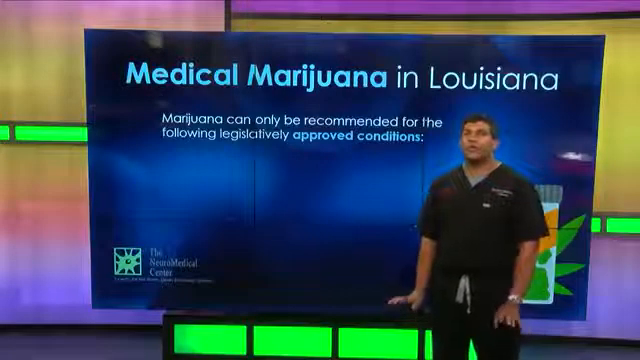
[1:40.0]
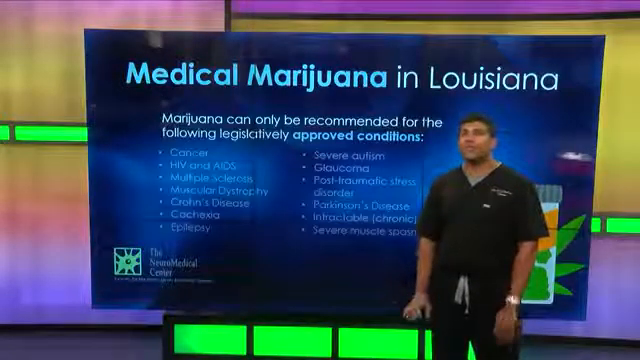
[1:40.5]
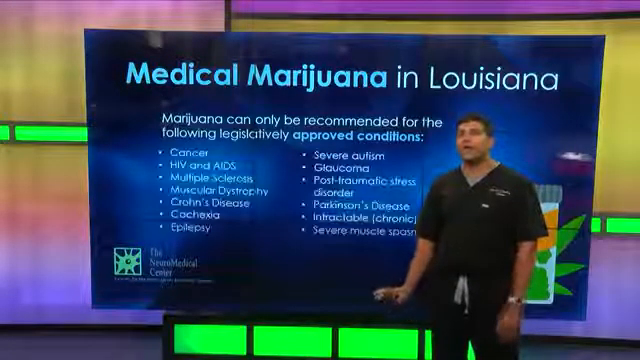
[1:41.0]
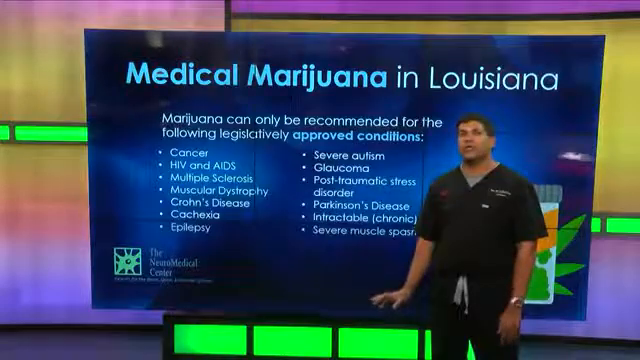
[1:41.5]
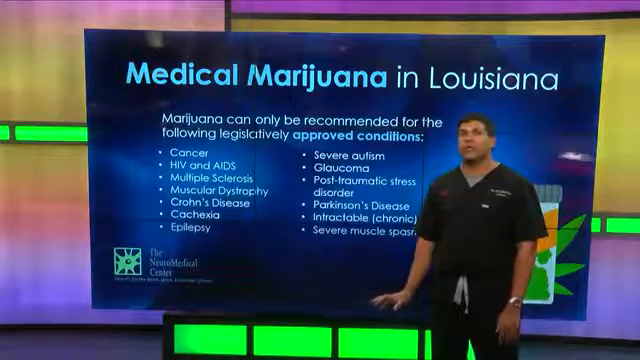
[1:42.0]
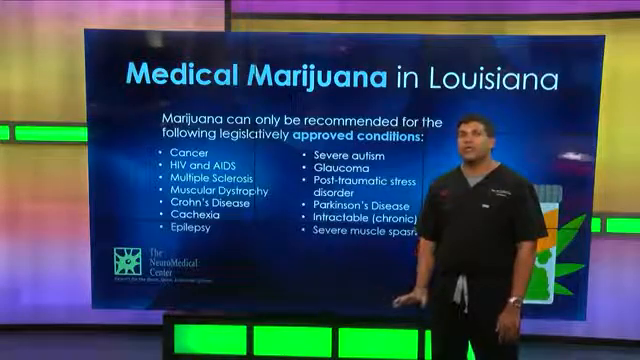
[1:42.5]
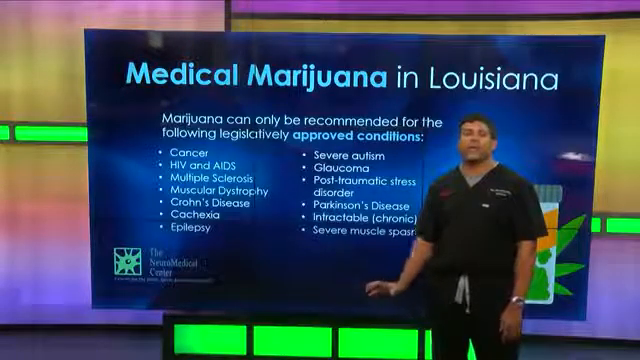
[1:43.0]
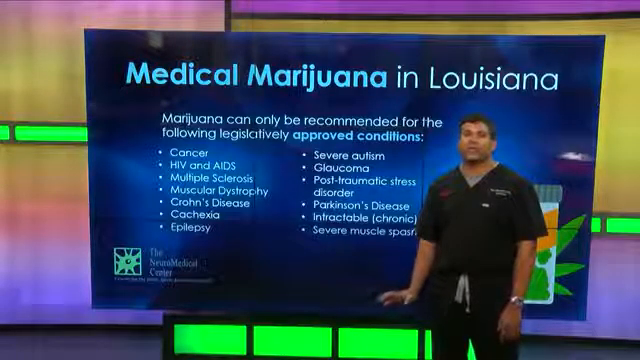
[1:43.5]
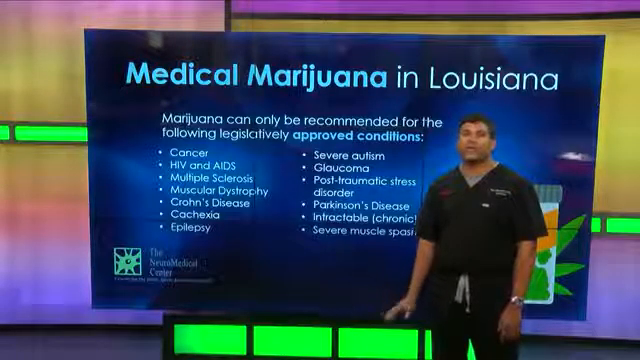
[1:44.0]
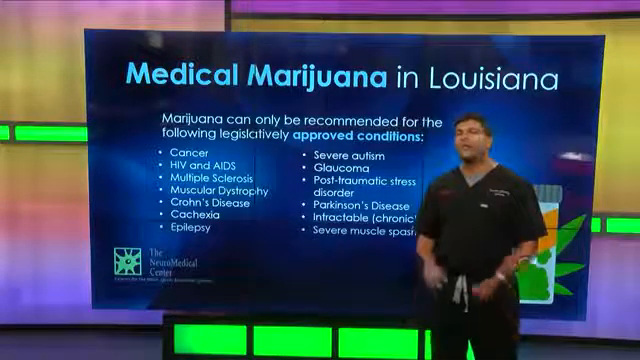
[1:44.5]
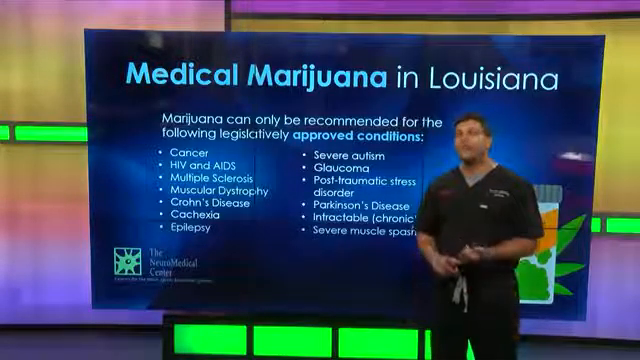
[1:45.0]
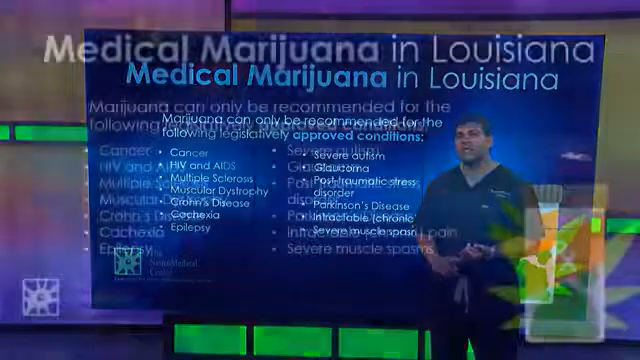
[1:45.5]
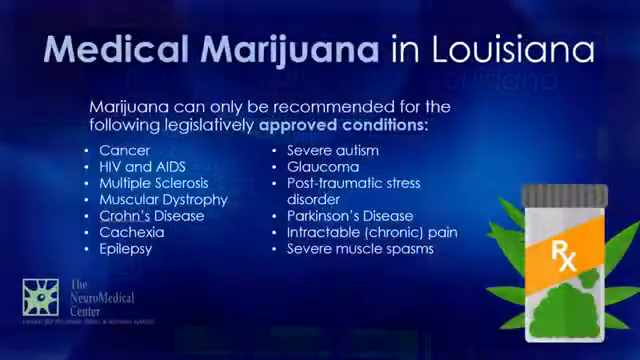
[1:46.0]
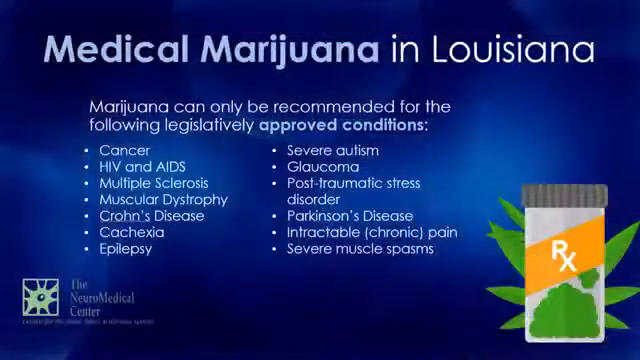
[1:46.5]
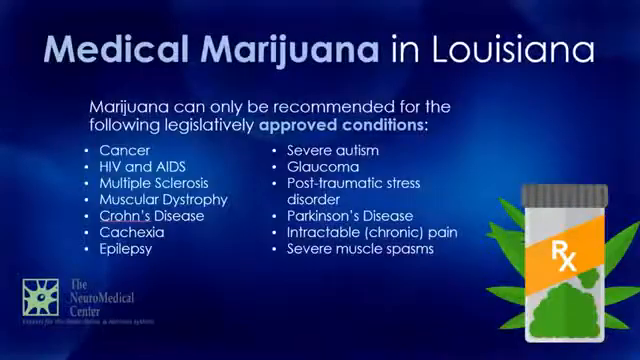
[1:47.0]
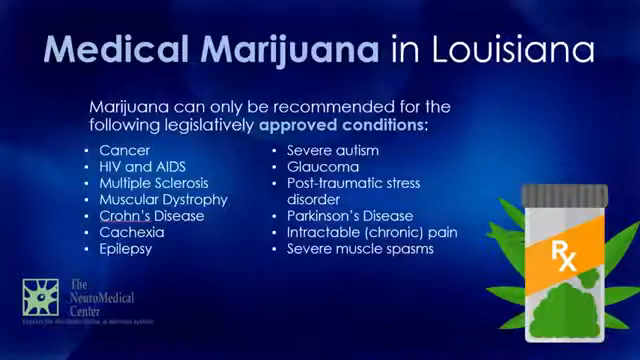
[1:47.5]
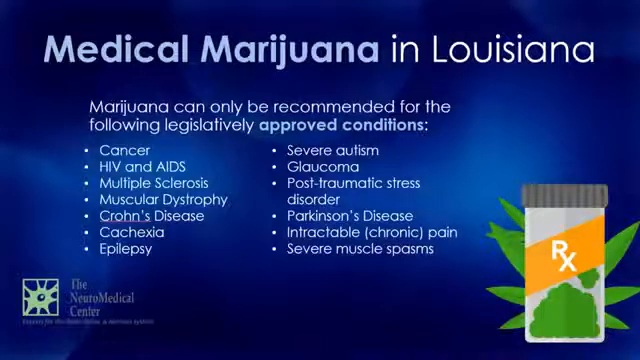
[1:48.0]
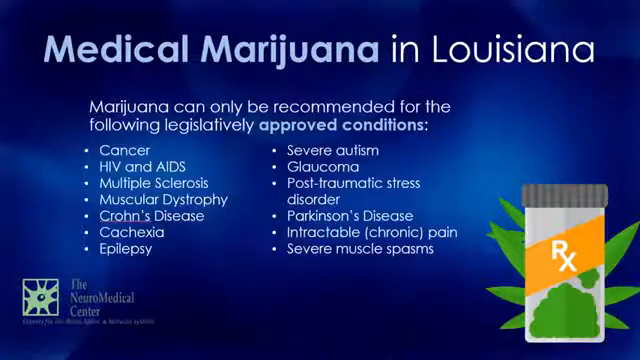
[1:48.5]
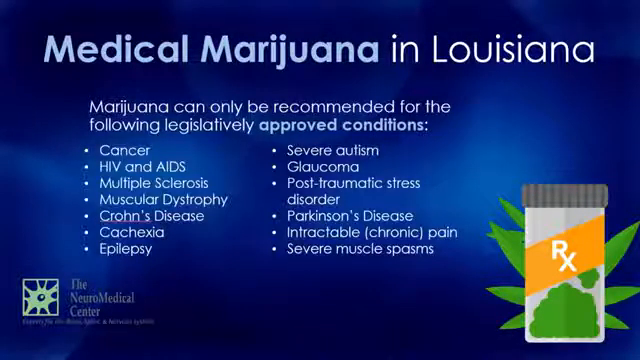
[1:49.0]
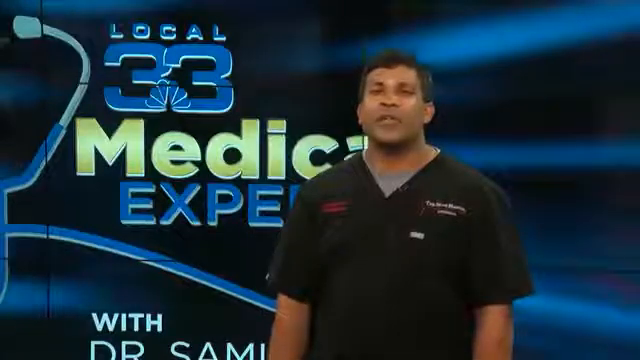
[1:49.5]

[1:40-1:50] In the newsroom, a blue screen shows the text "Medical Marijuana in Louisiana," followed by text and bullet points describing the approved conditions for which medical marijuana is recommended. A doctor stands in front of the screen wearing black scrubs and a wristwatch on his left wrist; his hair is cut short, and he talks while using hand gestures. The video transitions to a close-up of the blue screen with "medical marijuana in Louisiana," several bullet points listing conditions, and text stating these are the conditions medical marijuana has been approved for. In the bottom right corner is an image of a prescription pill bottle bearing the RX symbol and images of marijuana leaves, and in the bottom left corner is a logo for the Neuro-Medical Center.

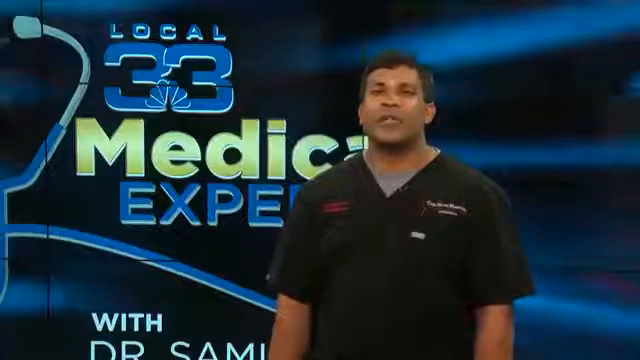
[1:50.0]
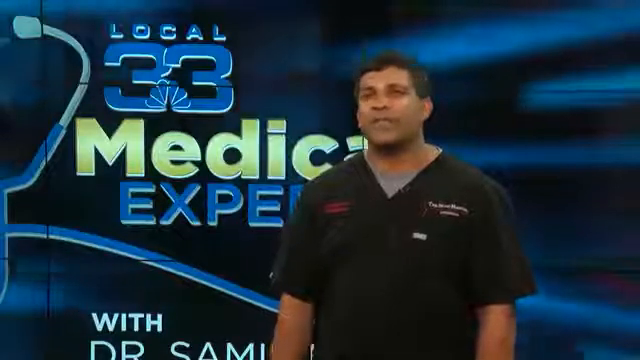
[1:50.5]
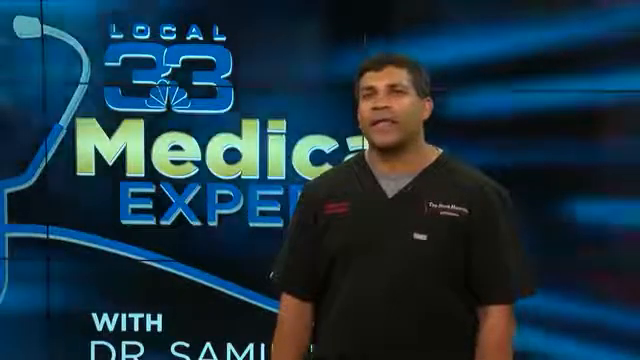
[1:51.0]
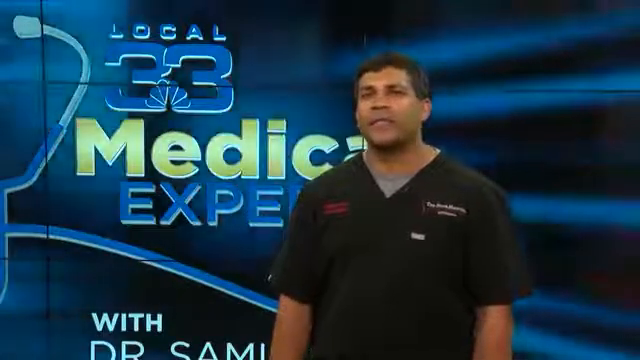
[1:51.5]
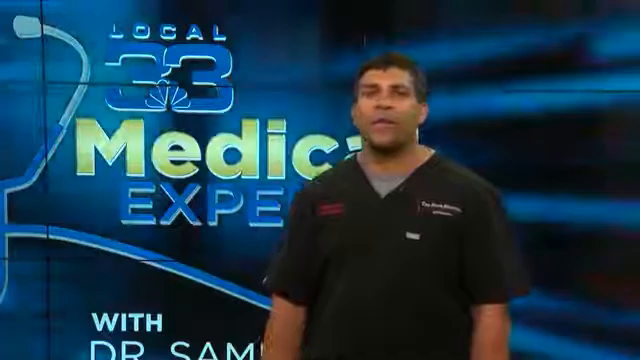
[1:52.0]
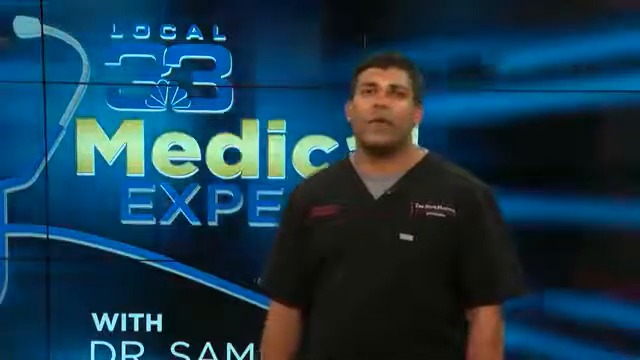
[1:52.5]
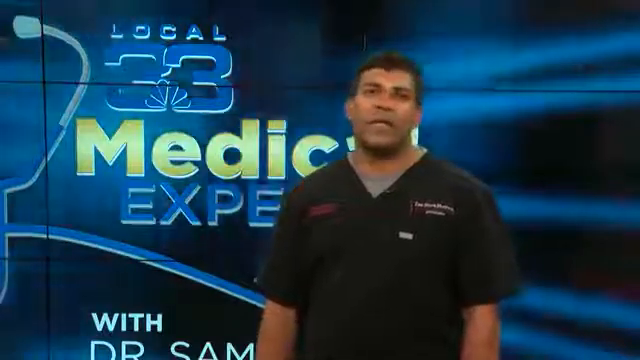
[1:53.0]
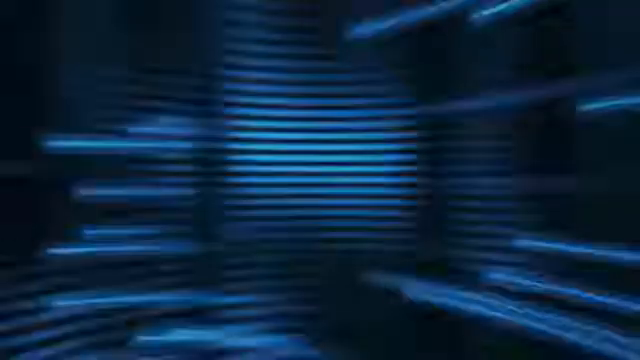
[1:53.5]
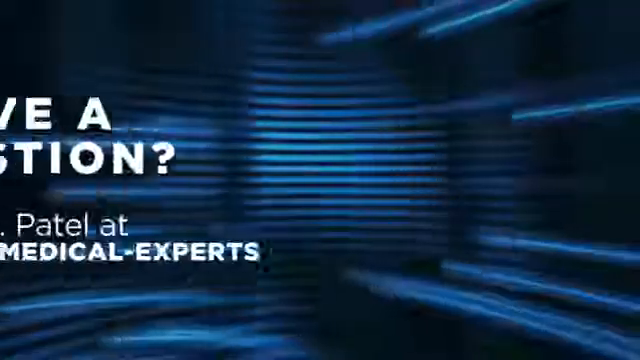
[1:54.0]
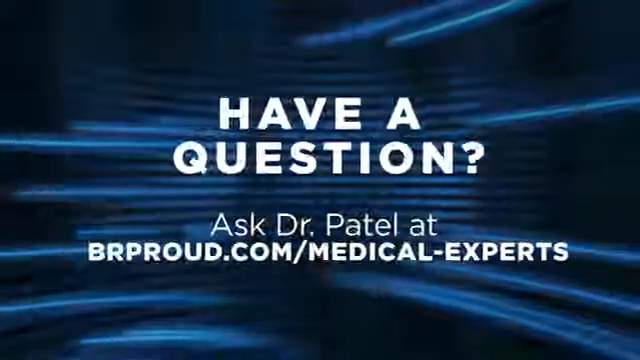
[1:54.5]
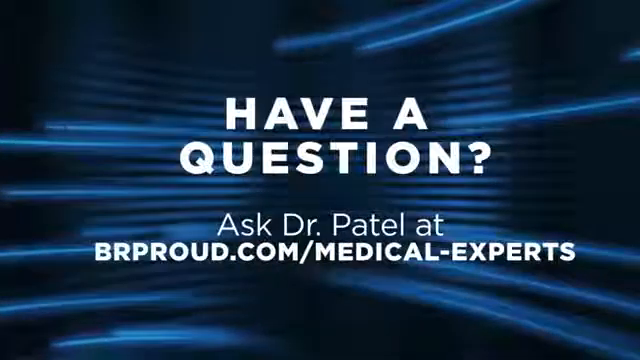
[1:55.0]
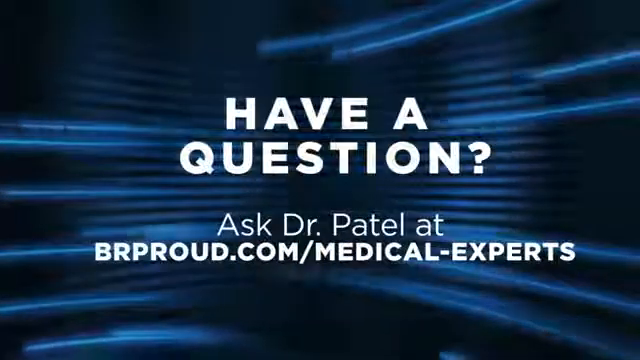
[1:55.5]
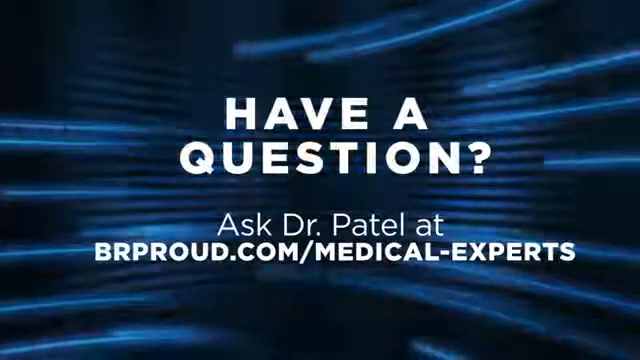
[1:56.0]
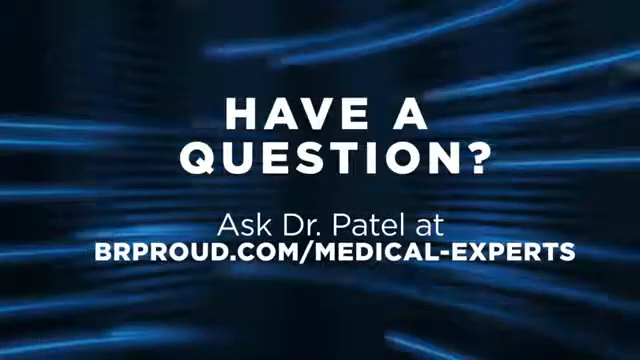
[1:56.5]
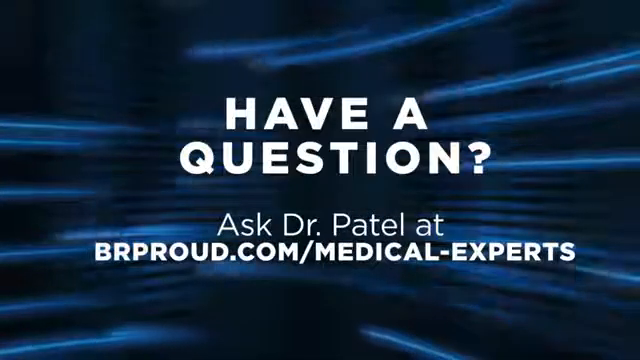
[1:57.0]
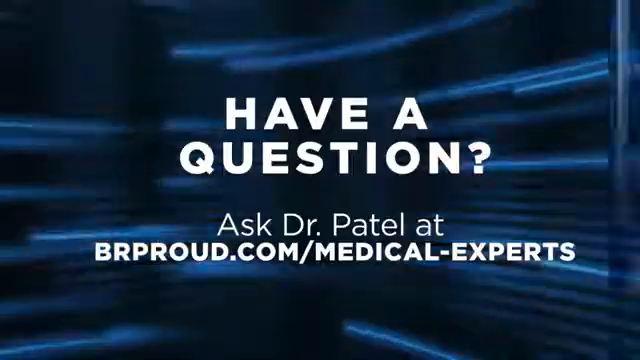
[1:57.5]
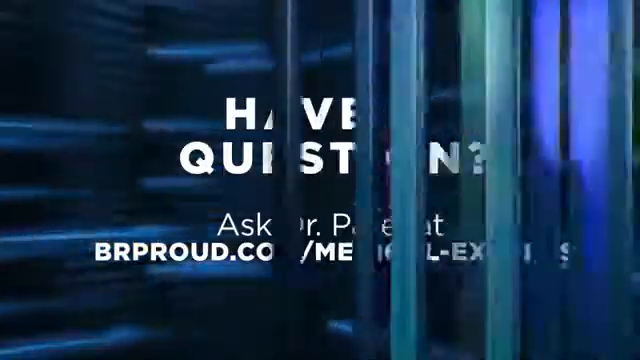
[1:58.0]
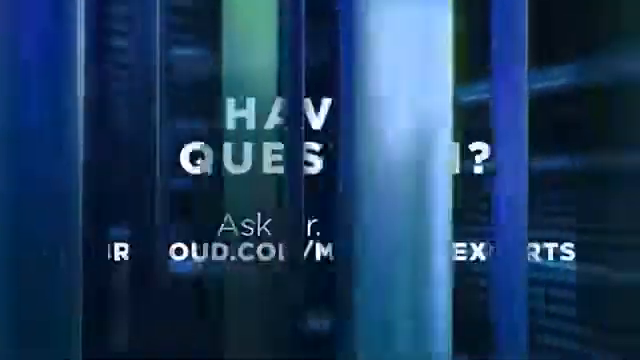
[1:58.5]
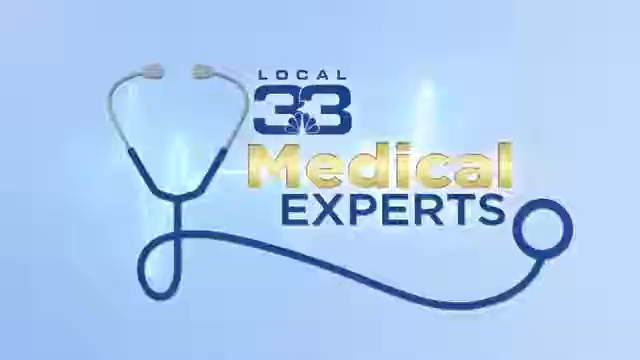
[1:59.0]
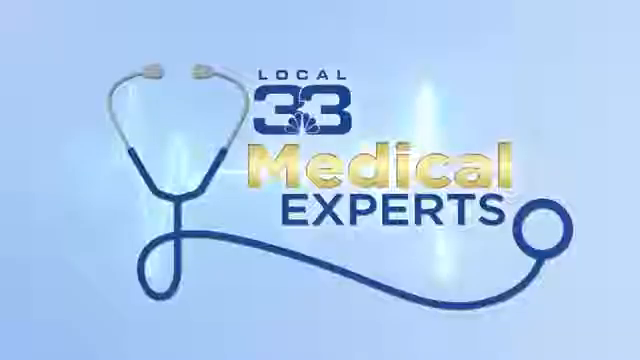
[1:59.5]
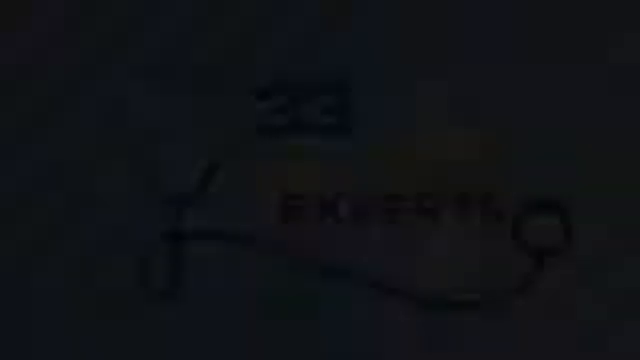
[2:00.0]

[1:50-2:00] In the newsroom, a blue screen shows a logo reading "Local 33," an image of a stethoscope, and the words "Medical expert." In front of the screen is a doctor dressed in black scrubs, who appears to be in his 30s and is talking. The video transitions to a blue screen with lighter blue stripes and white text reading "have a question? Ask Dr. Patel at brproud.com/medical-experts." The screen is in motion, with what looks like stripes moving in a semicircle across it, and it looks to be neon blue as well as lighter blues.